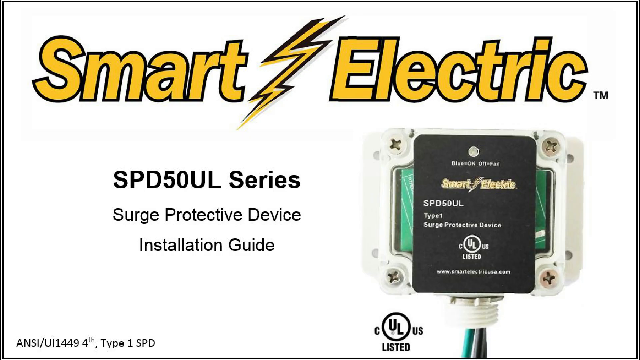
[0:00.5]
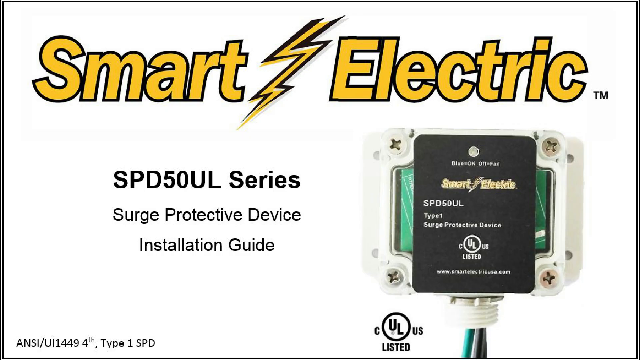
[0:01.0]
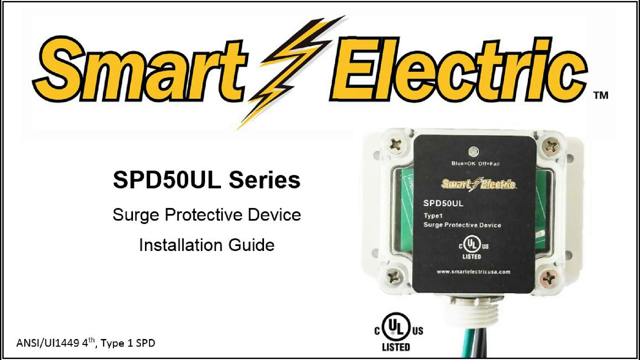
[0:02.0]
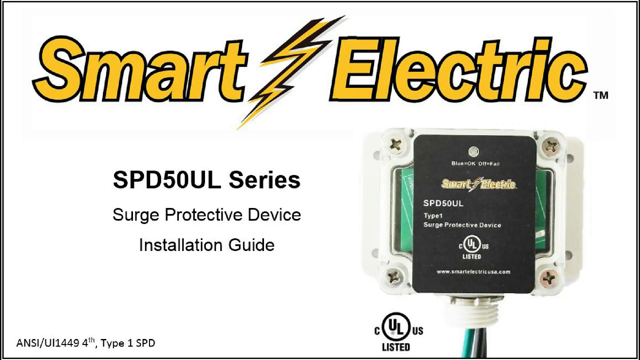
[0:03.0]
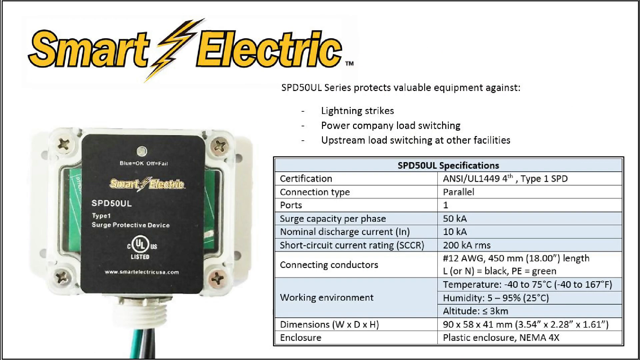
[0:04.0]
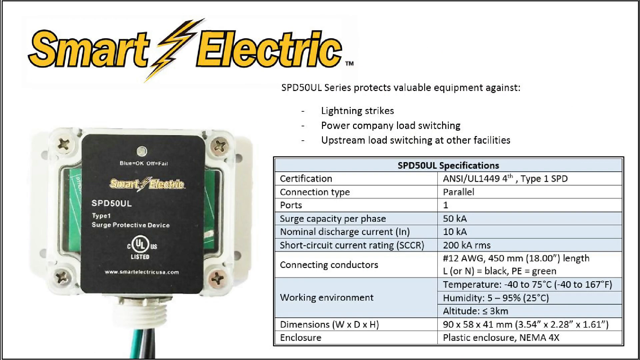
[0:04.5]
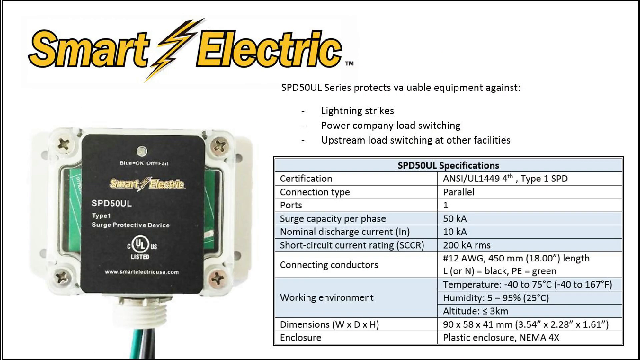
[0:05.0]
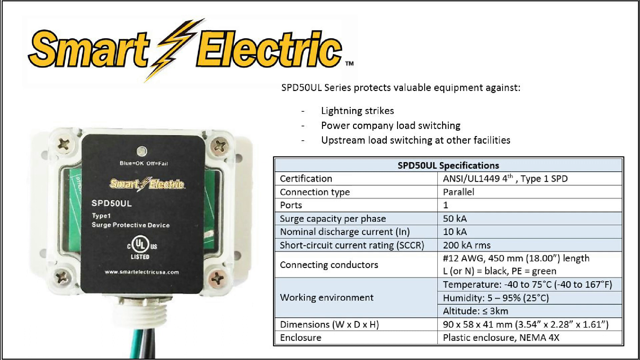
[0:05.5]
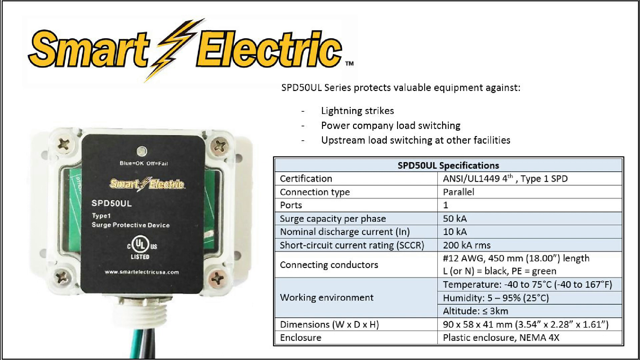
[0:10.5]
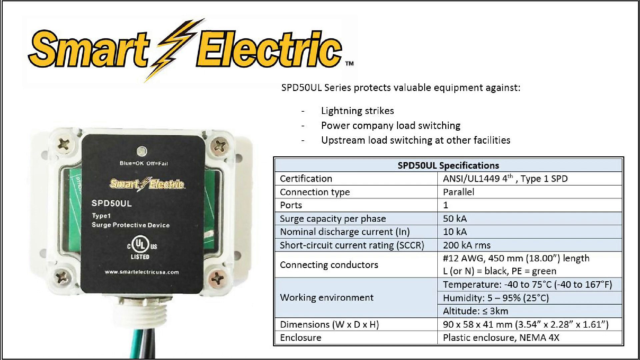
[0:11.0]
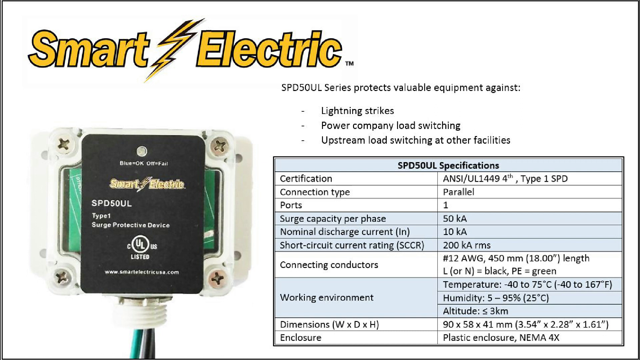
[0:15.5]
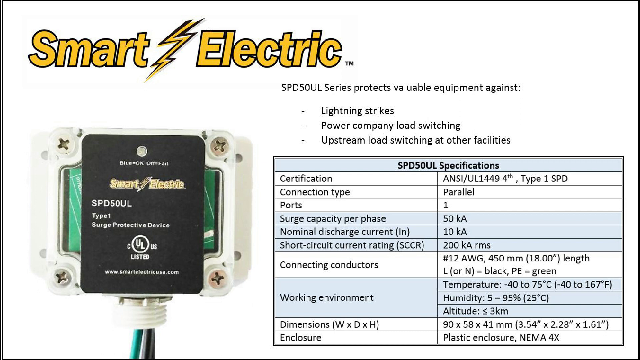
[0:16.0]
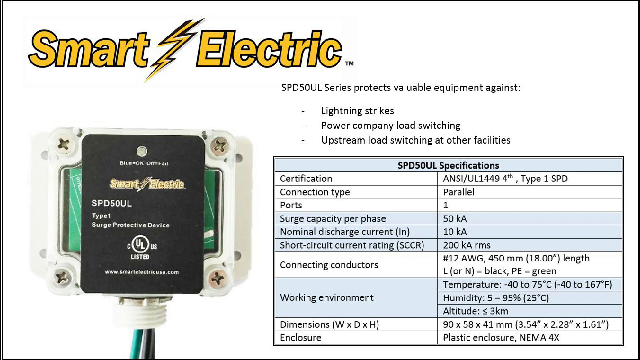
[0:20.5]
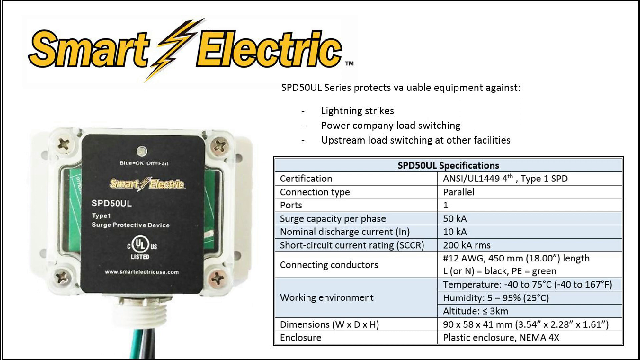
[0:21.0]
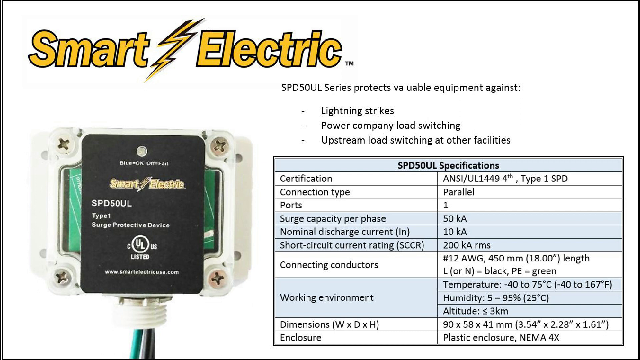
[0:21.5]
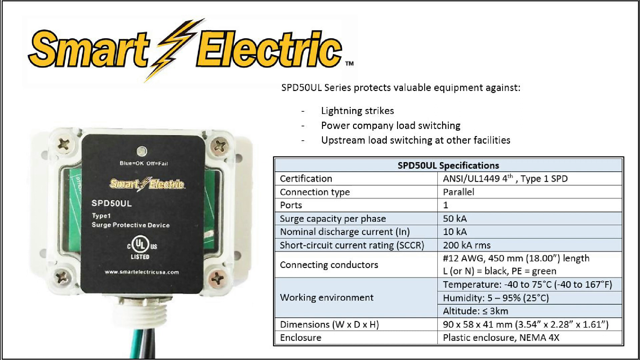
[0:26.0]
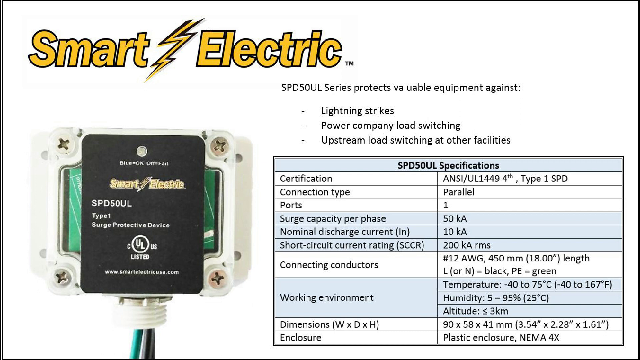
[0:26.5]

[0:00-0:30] A slideshow-style graphic opens with the title "smart electric" in yellow with a black outline, with a lightning bolt in the same colors between "smart" and "electric." Below it, bold text reads "spd50ul series," and below that, in normal non-bold text, "surge protective device installation guide." Next to the text is a picture of what appears to be the Smart Electric SPD50UL series device, the surge protector. The next shot shows a different Smart Electric slide, again showing the surge protective device along with what it can protect valuable equipment against: lightning strikes, power company, load switching, and upstream load switching at other facilities. Specifications are given in a table below, including certification, connection type, port, working environment, conductors, enclosures, dimensions, short circuit, current rating, nominal discharge current, and surge capacity per phase.